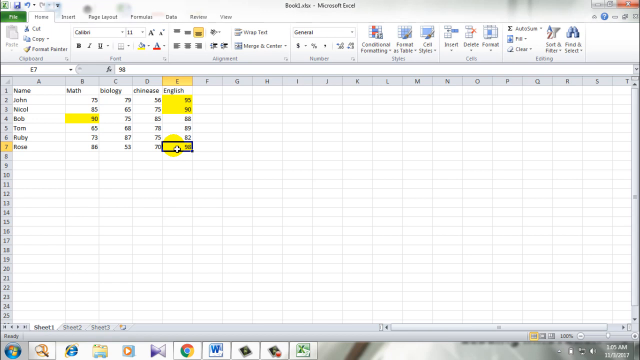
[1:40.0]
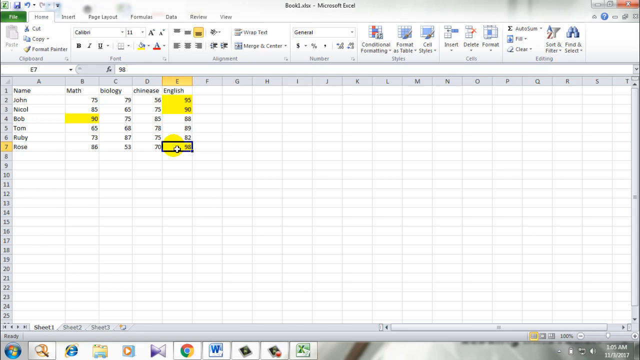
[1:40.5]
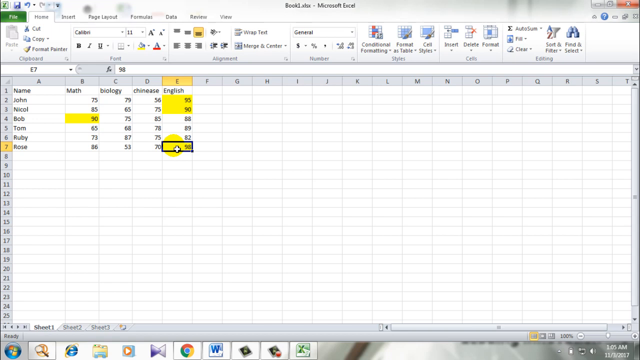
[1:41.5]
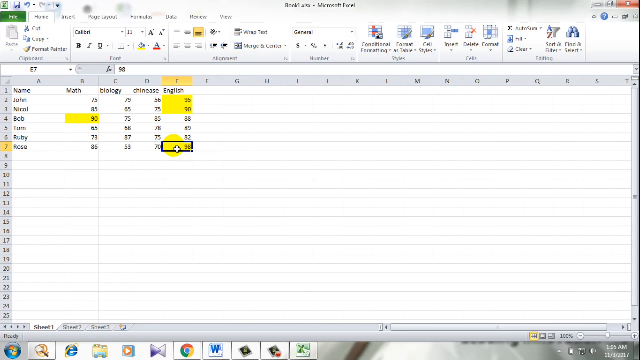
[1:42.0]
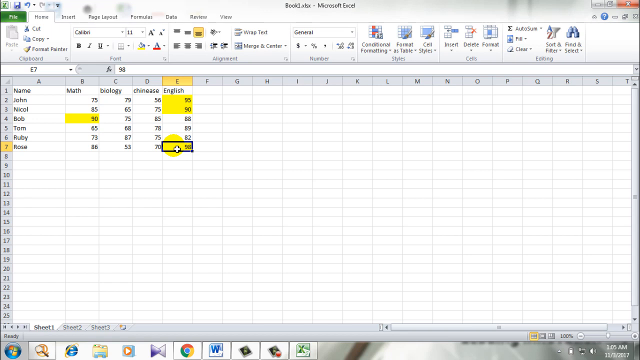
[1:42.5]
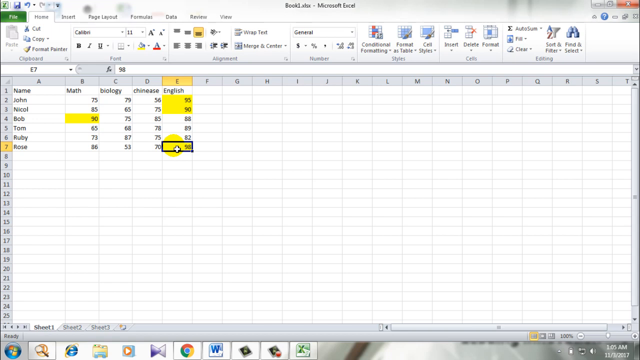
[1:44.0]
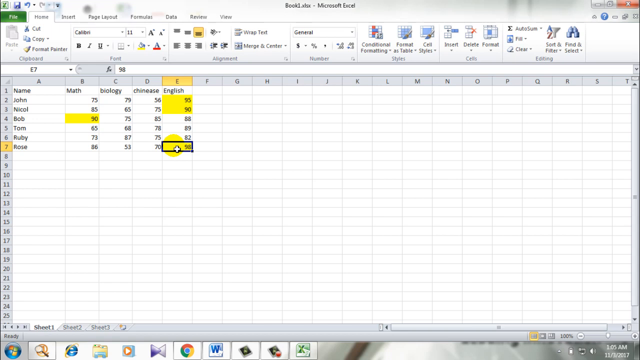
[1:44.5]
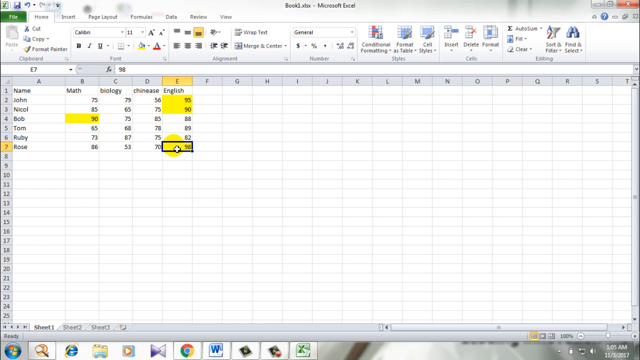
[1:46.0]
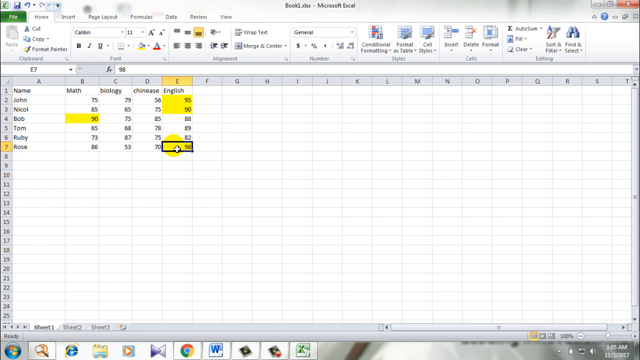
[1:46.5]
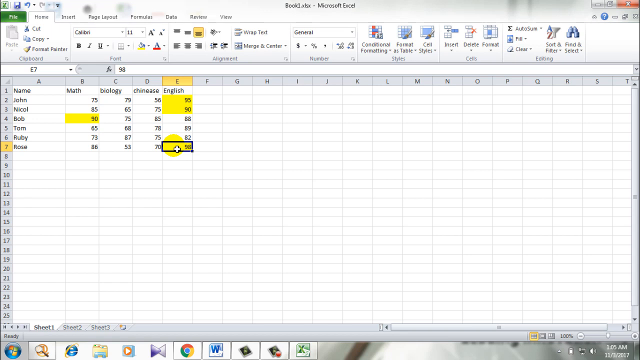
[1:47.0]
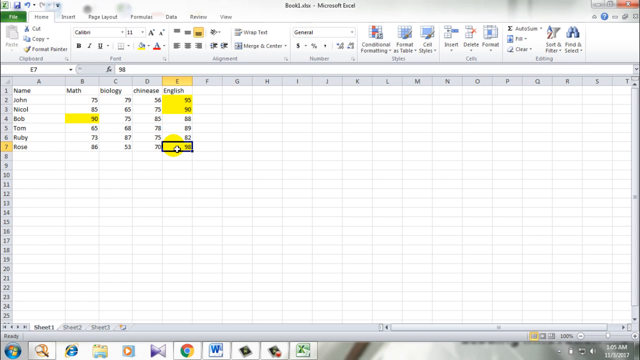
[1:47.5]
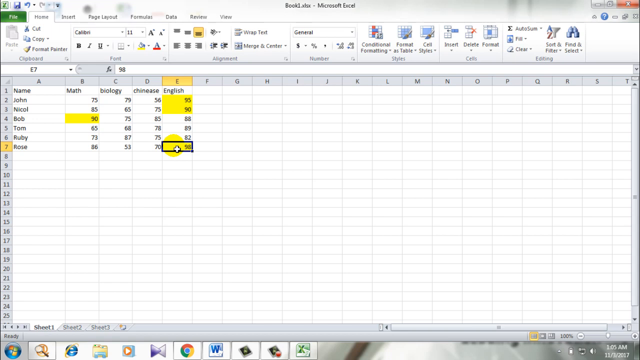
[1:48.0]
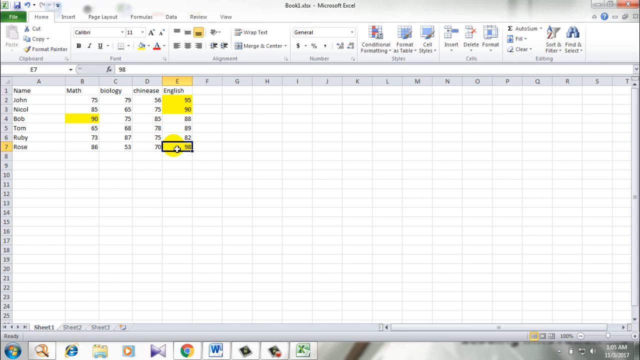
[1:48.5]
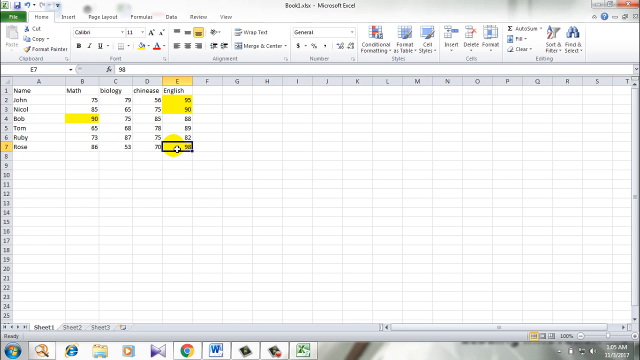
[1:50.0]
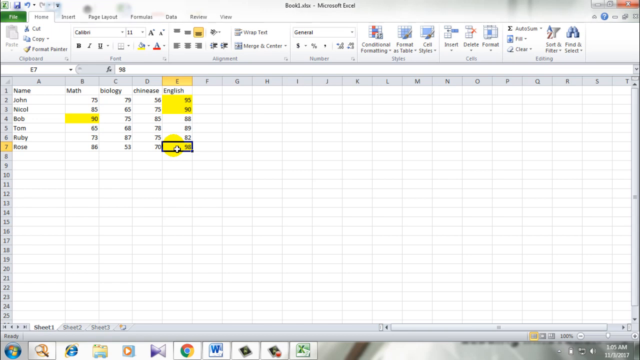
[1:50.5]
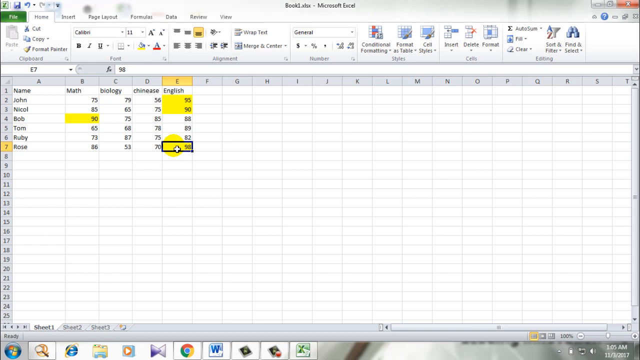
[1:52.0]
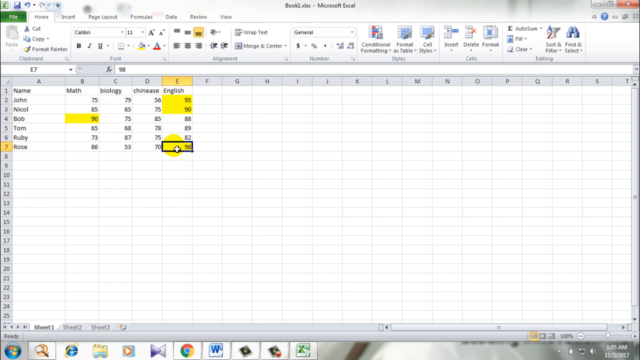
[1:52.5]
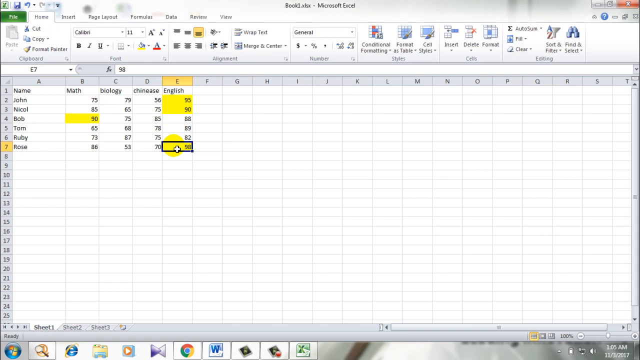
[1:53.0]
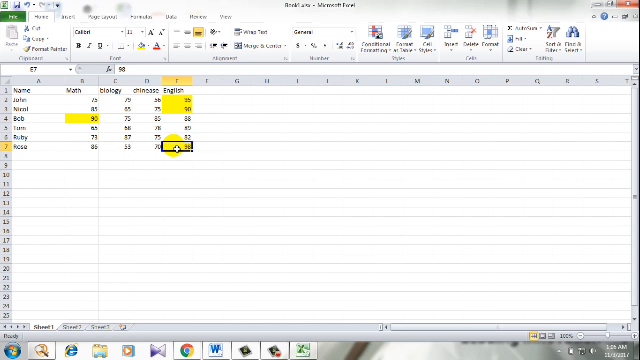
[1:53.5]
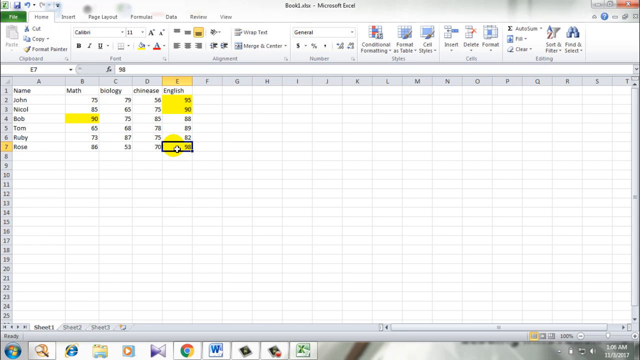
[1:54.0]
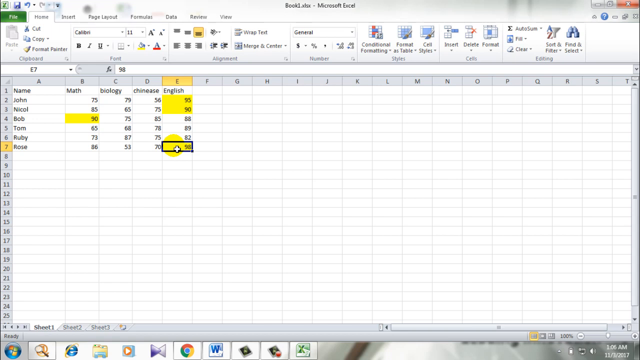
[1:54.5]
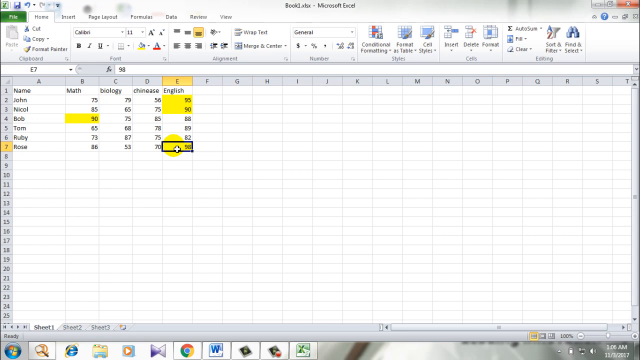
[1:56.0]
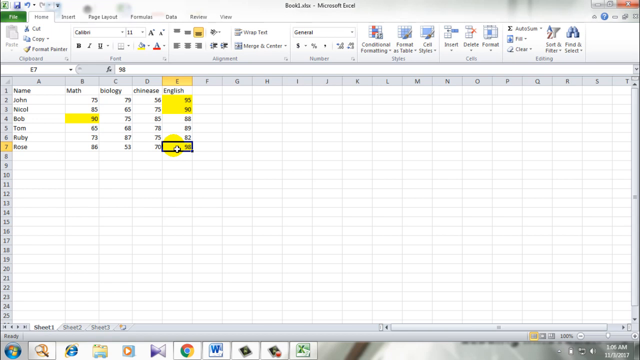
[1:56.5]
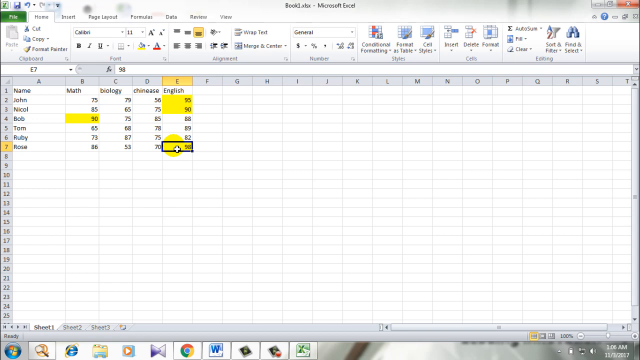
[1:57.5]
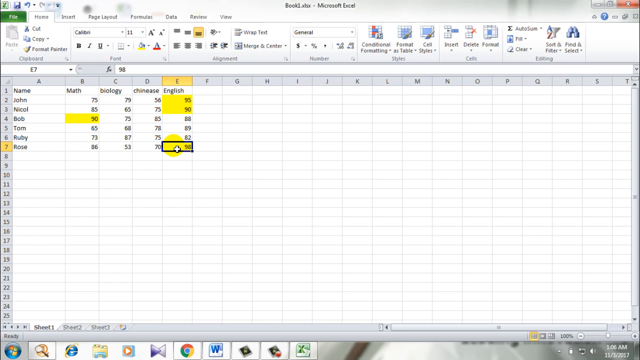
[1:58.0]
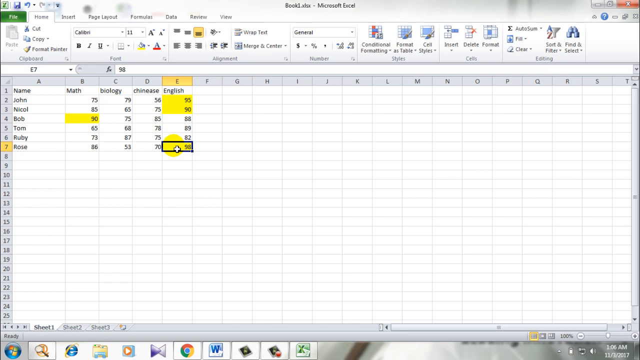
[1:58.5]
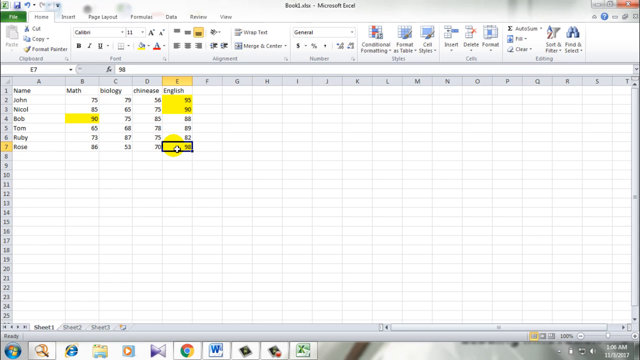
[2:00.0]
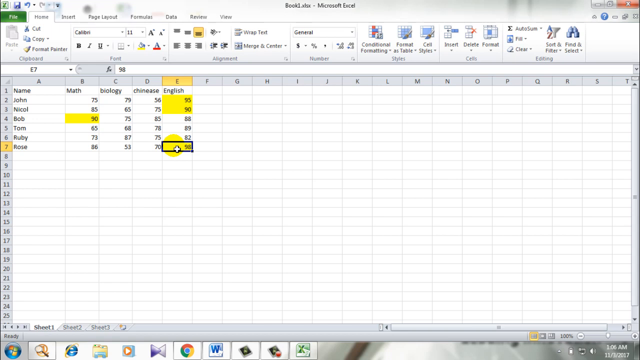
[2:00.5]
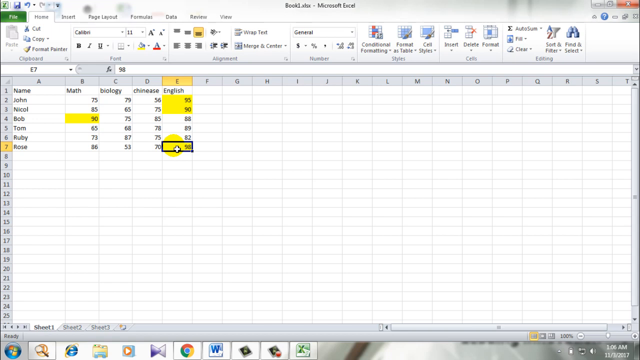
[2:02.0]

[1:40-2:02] The simple Excel table is five columns wide by seven rows down: column A is name, column B math, column C biology, column D Chinese and column E English. Row two is John, three is Nicole, four is Bob, six is Ruby and seven is Rose, with each student's scores in each subject. Conditional formatting has been added, and the teacher clicks around on the different cells with values between 90 and 100 to draw attention to their new formatting: they have a yellow background, while none of the other cells do.